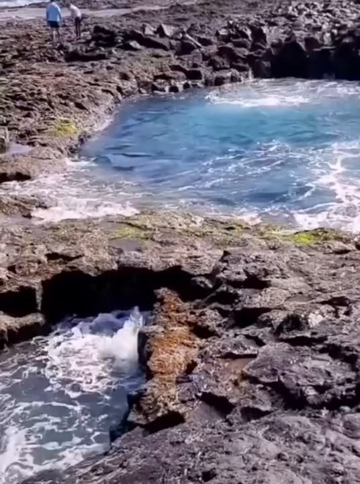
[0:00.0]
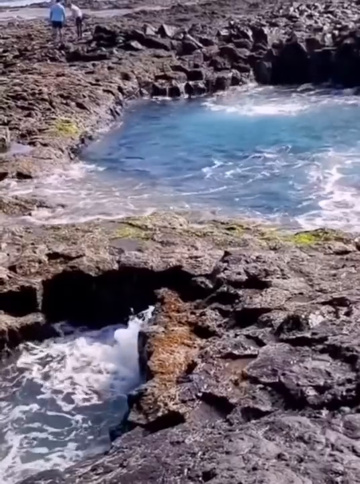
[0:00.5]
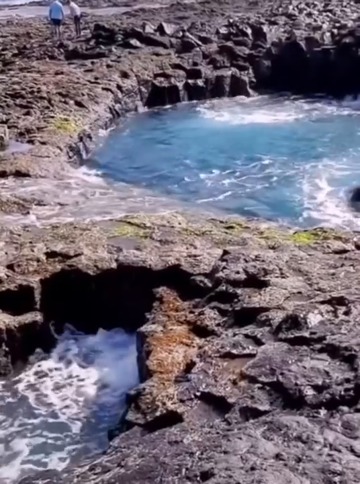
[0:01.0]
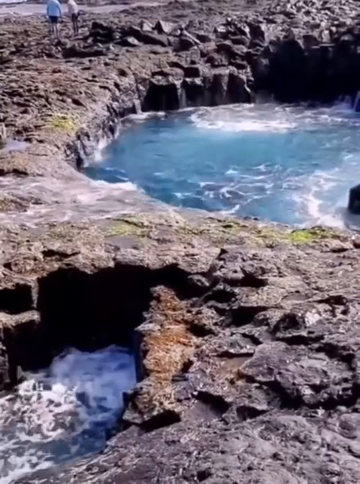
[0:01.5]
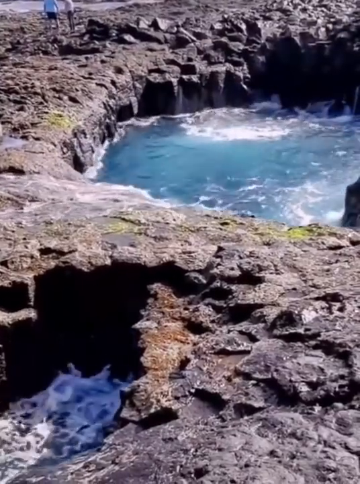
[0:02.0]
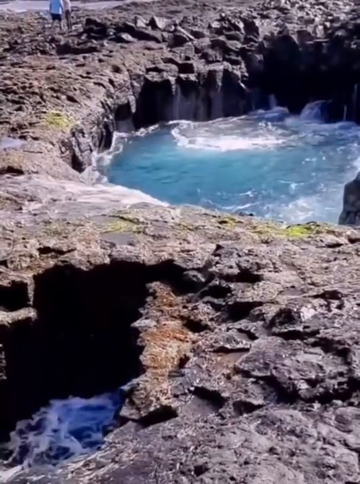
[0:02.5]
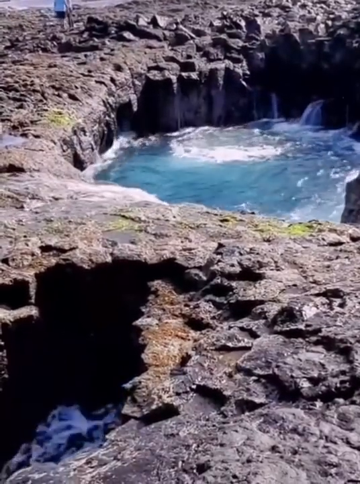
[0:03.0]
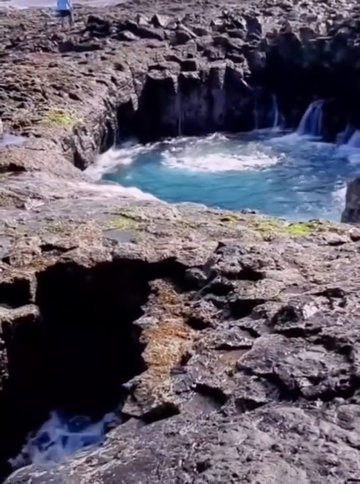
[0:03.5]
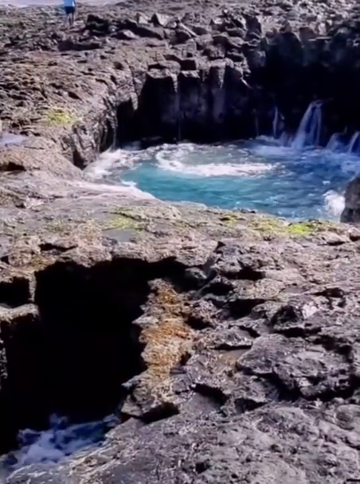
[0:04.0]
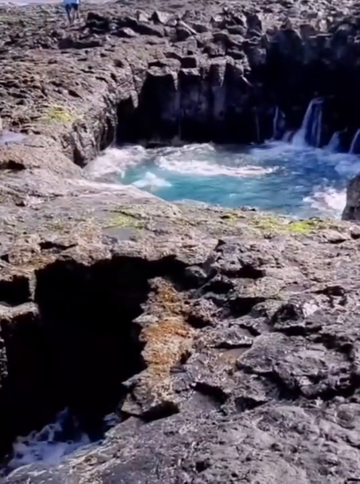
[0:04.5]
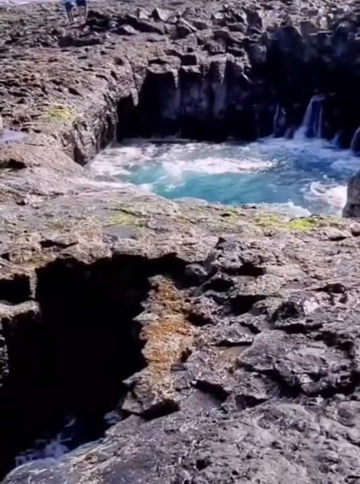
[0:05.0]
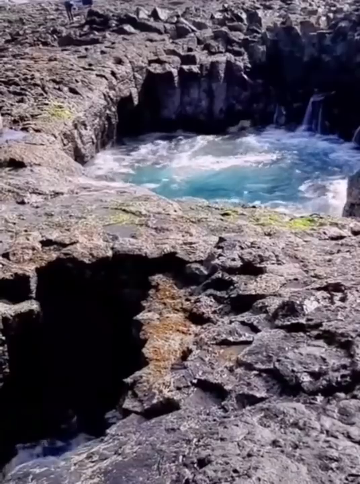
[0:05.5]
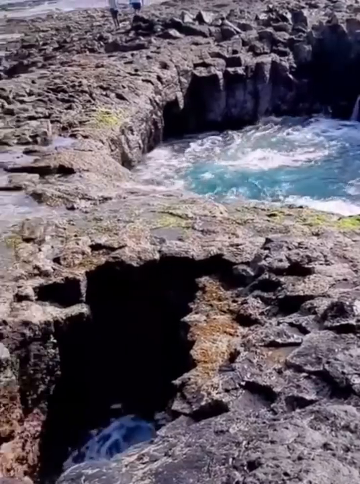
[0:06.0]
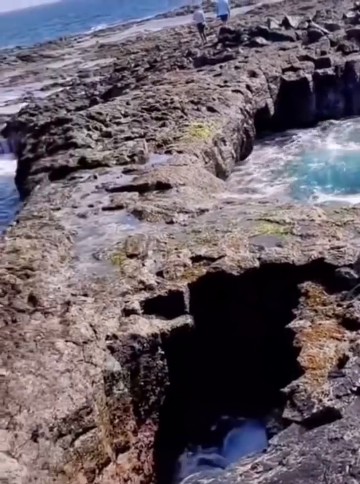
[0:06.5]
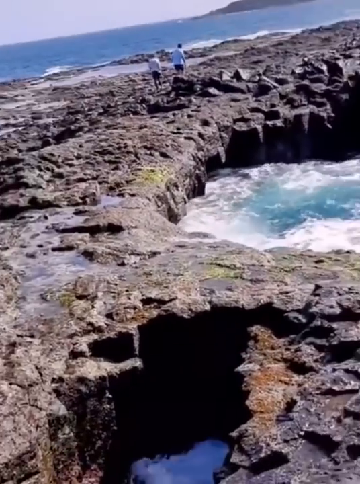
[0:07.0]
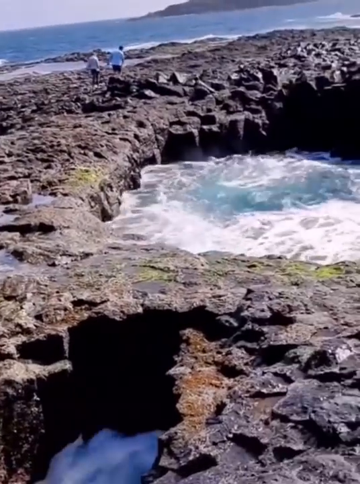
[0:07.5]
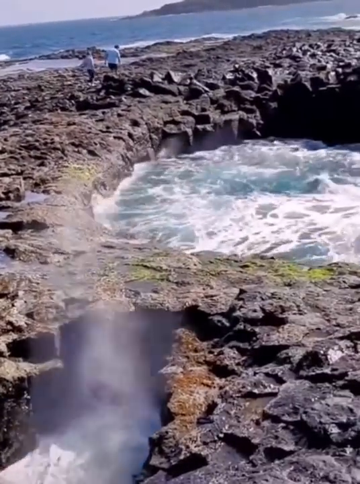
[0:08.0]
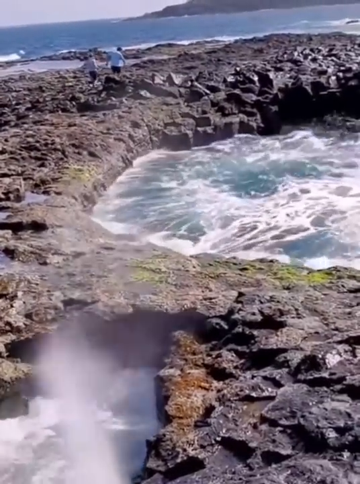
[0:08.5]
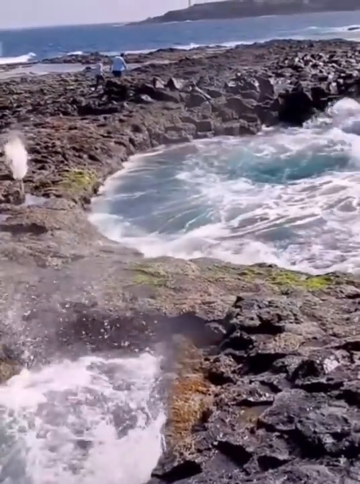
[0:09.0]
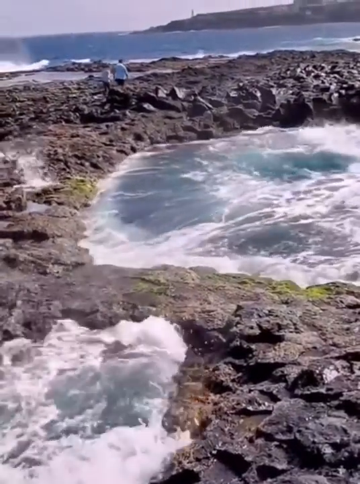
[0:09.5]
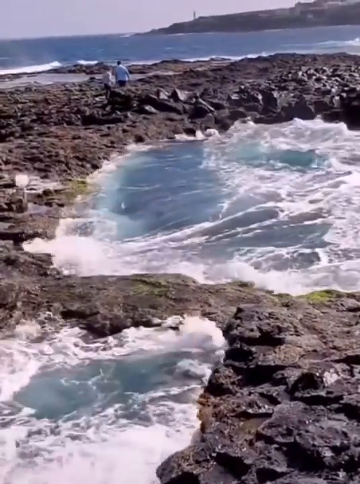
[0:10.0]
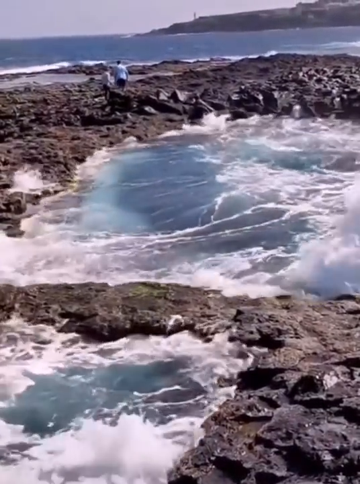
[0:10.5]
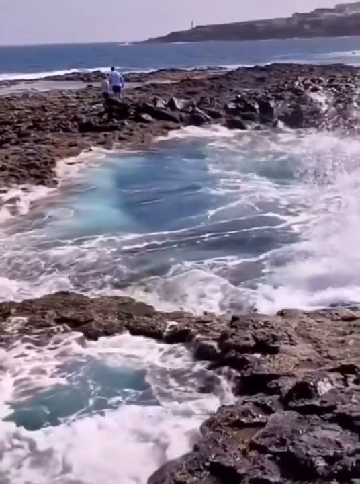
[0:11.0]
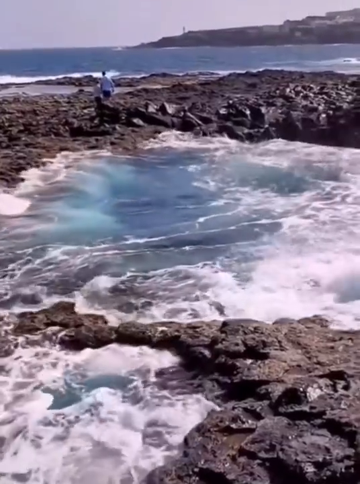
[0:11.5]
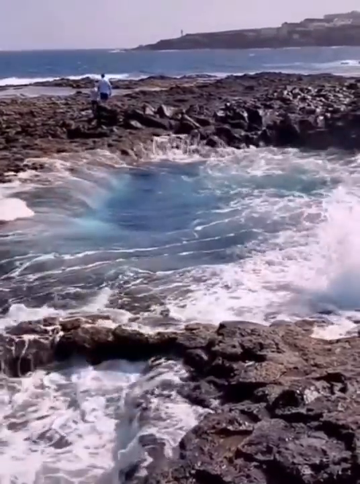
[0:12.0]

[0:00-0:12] Titled High Tide, Low Tide, High Tide, Low Tide, the video shows a bunch of rocks with the water behind them, which looks like the ocean. The footage appears to be sped up, possibly a time lapse, though some people standing off in the distance on the rock barely move. The rock looks almost like a platform, and the water around it looks kind of wild and vicious. There are two big holes in the rocks that go down, and the water level inside them is visible: it starts at the very top, then drains really fast until there is nothing left in them, then backs up again, spewing water until it overtakes the rock again, so that it looks like the rock is breathing. The water is very blue, and the rocks are really dark, creating a strong contrast. There is a little bit of moss on the rocks, and they look like they could be slippery. In the distance there is more water and more of the similar dark, giant rock. The water looks stirred up and not calm at all, as if it could take out a boat.